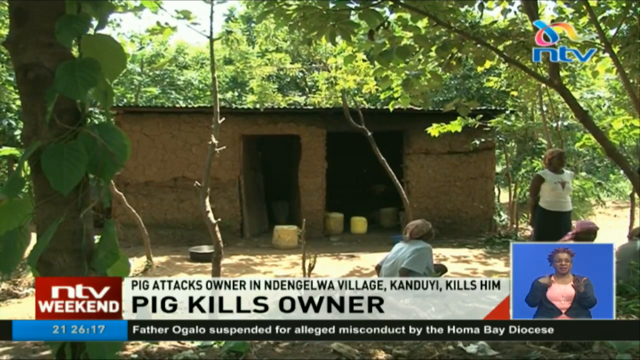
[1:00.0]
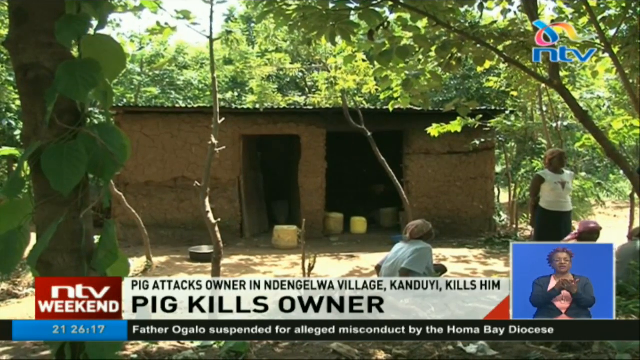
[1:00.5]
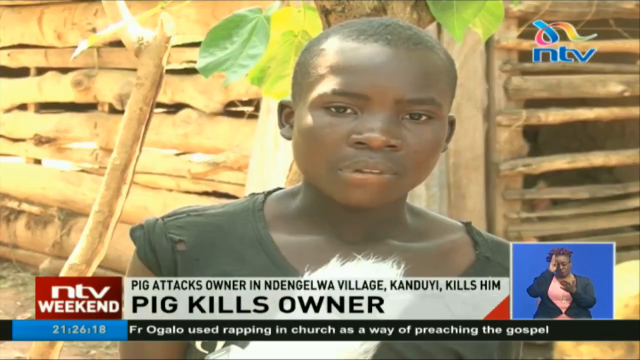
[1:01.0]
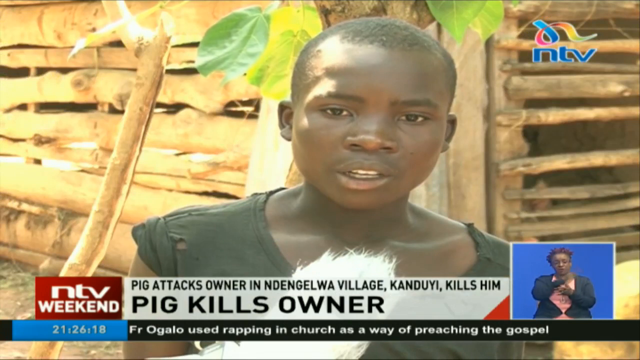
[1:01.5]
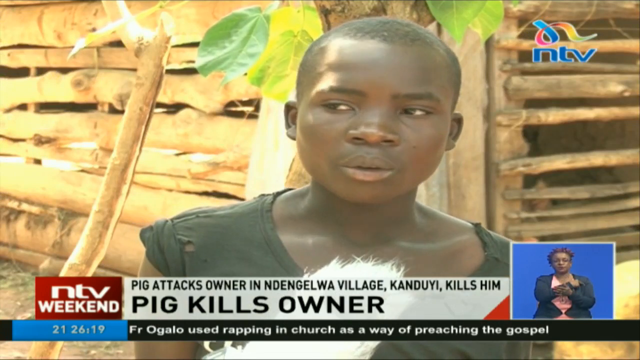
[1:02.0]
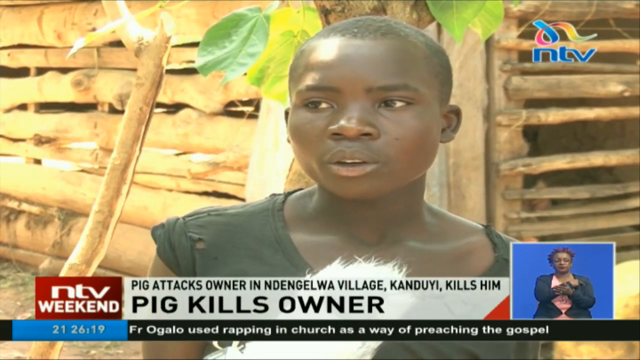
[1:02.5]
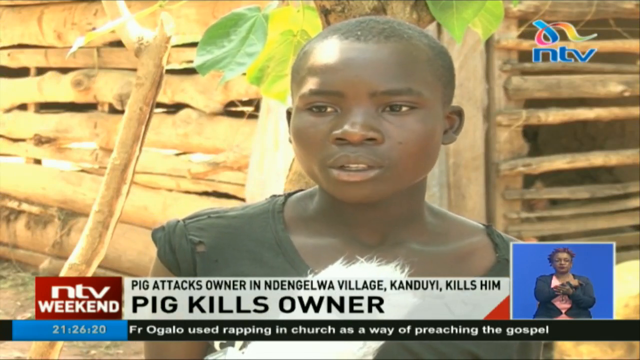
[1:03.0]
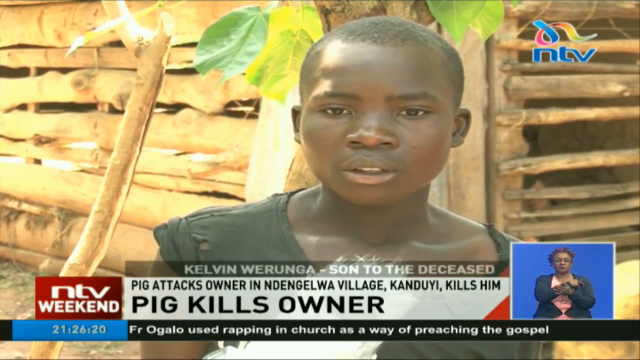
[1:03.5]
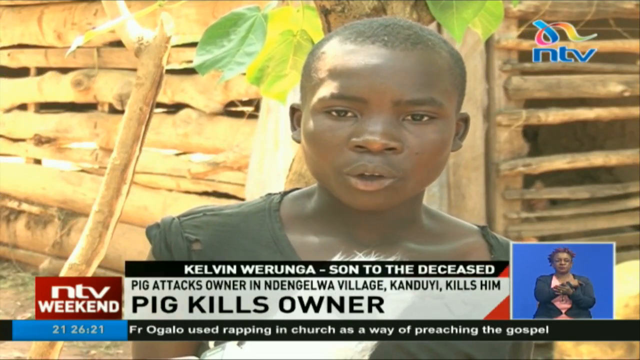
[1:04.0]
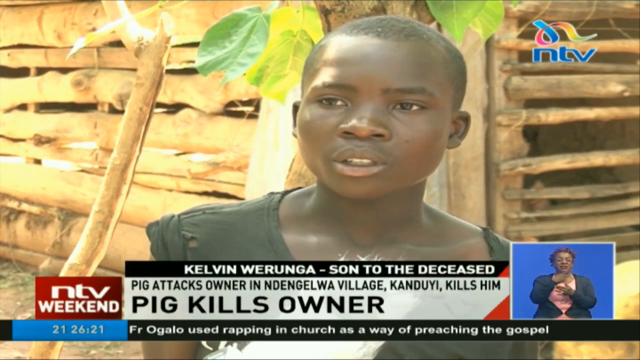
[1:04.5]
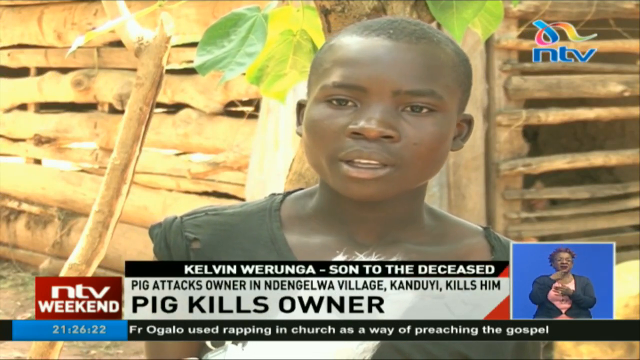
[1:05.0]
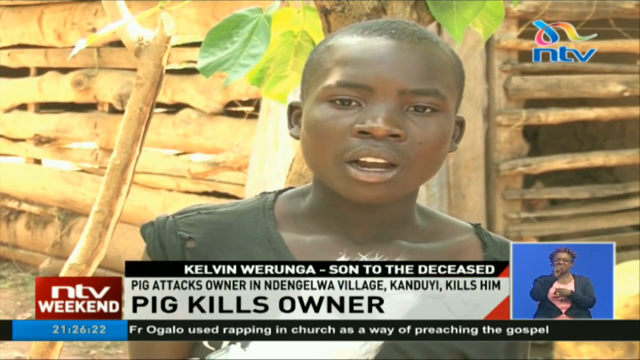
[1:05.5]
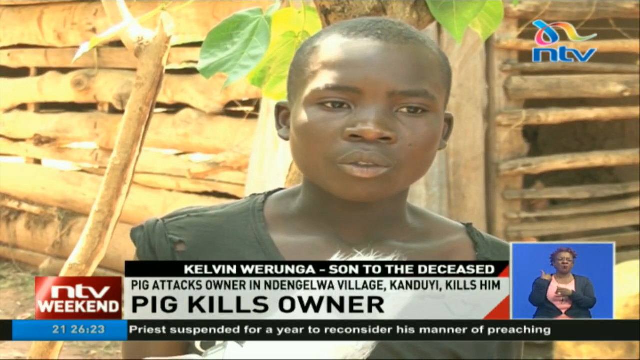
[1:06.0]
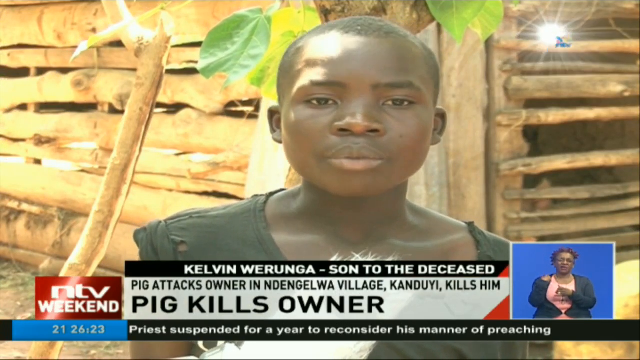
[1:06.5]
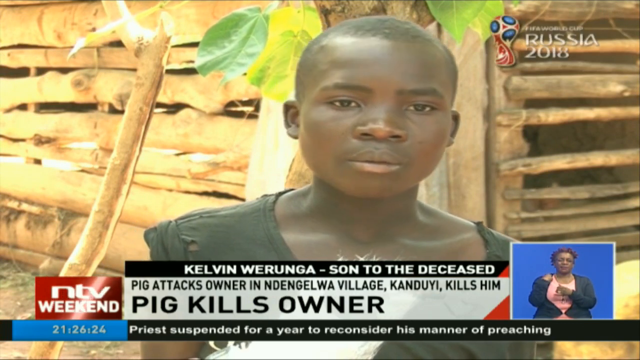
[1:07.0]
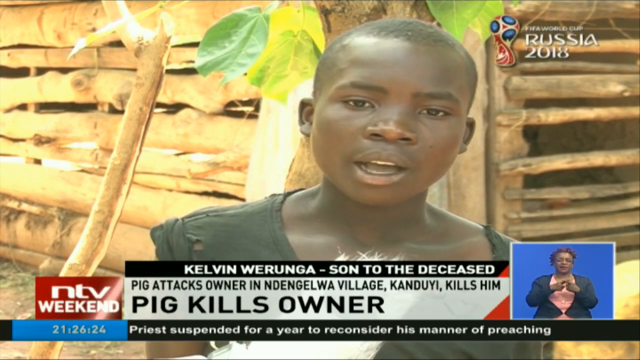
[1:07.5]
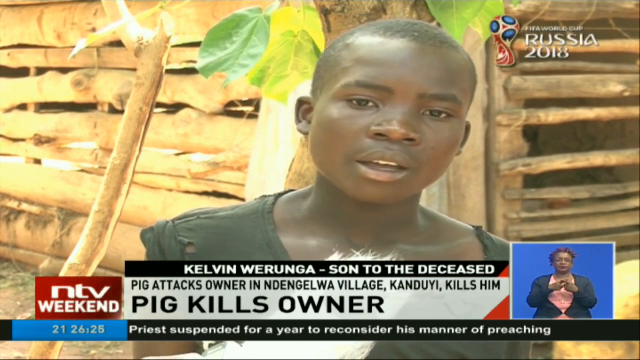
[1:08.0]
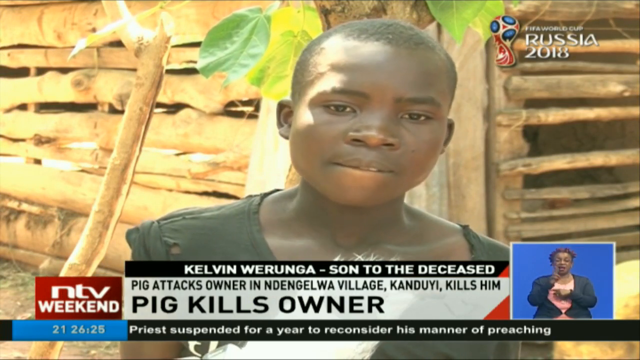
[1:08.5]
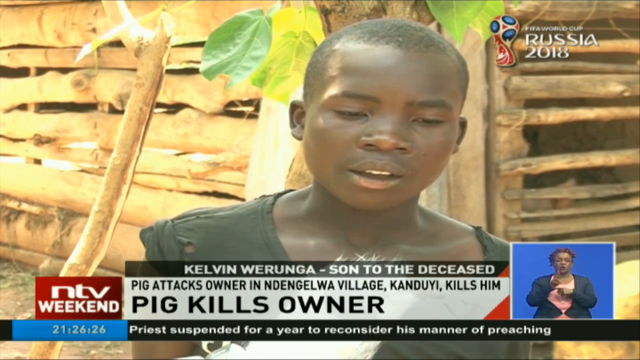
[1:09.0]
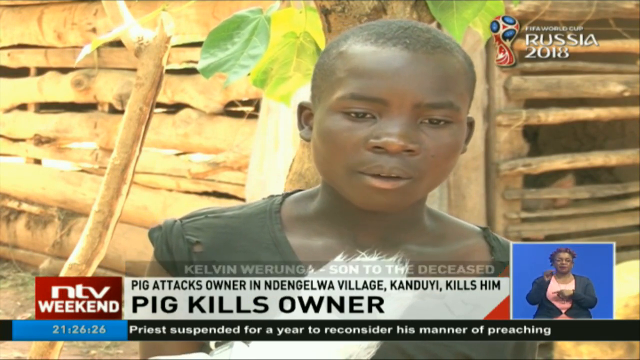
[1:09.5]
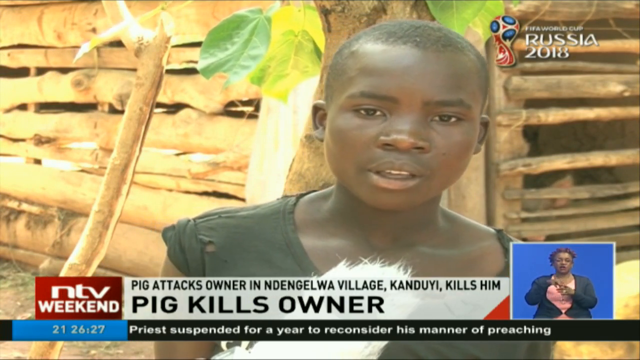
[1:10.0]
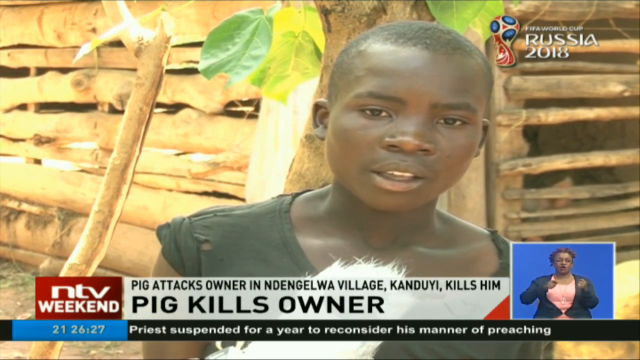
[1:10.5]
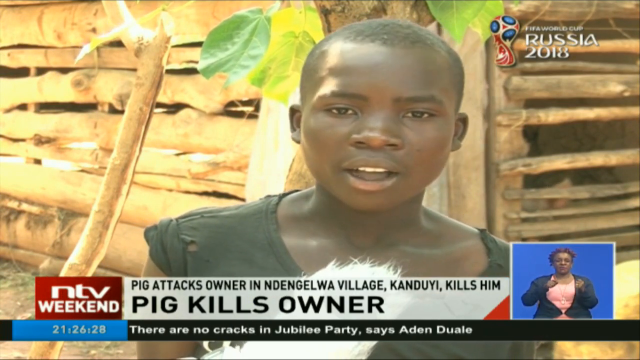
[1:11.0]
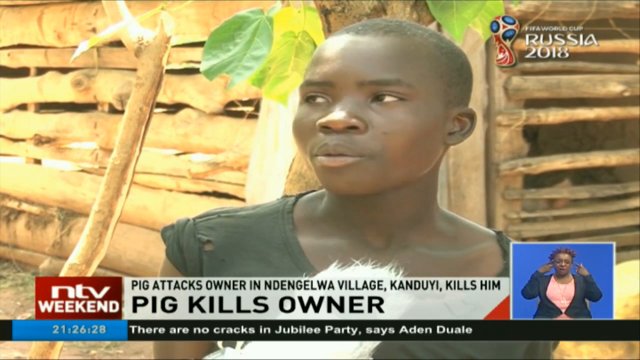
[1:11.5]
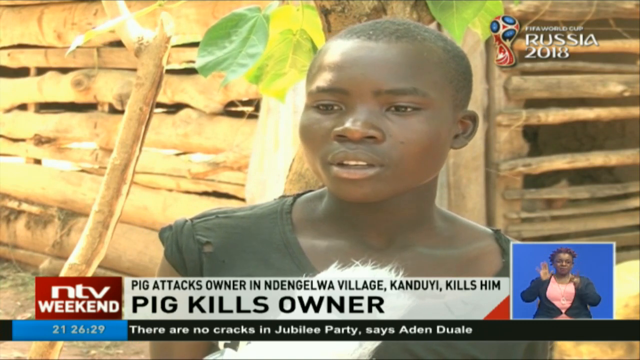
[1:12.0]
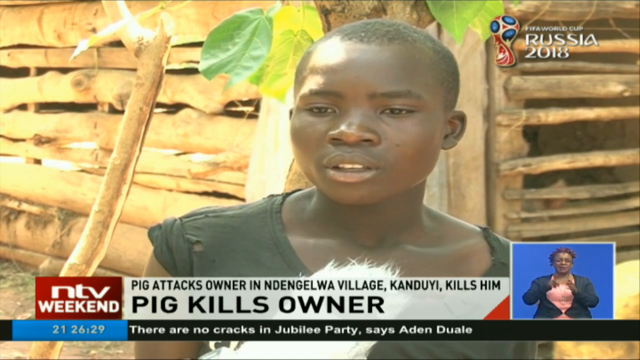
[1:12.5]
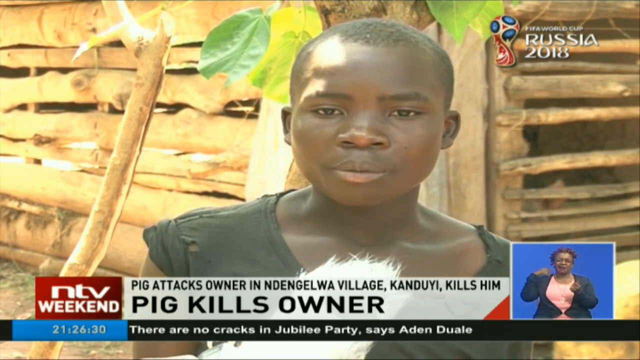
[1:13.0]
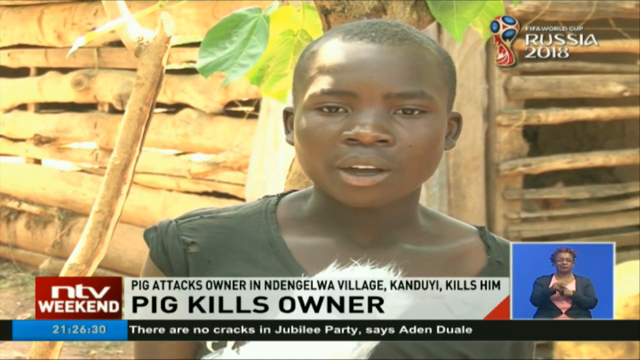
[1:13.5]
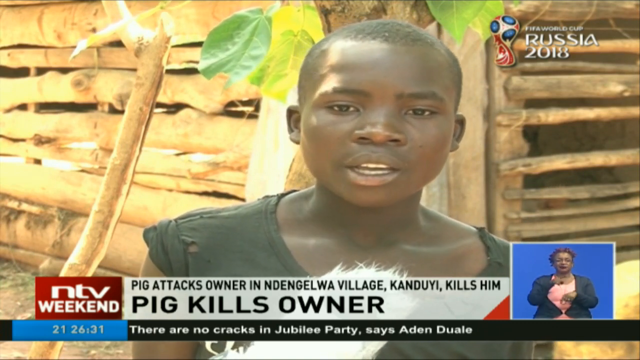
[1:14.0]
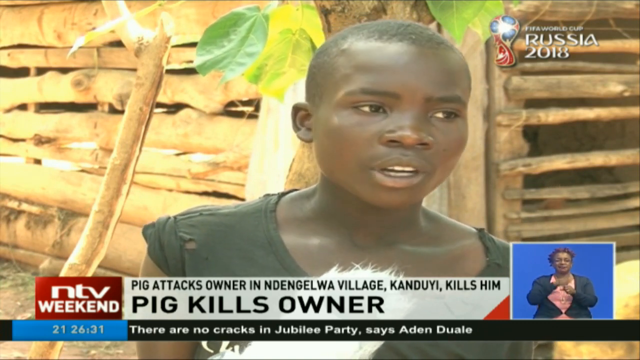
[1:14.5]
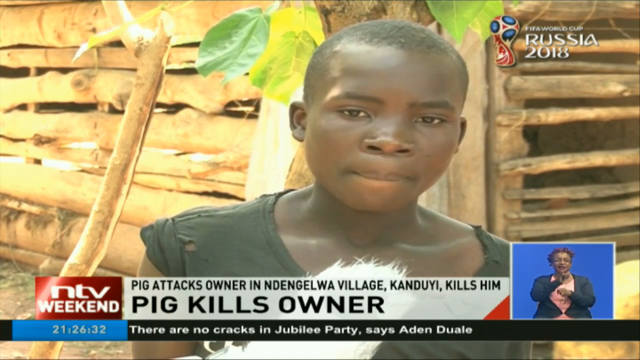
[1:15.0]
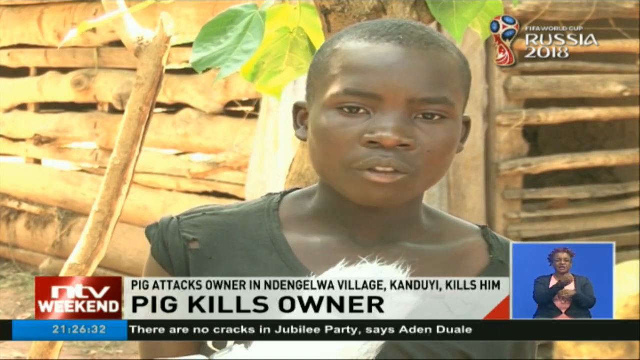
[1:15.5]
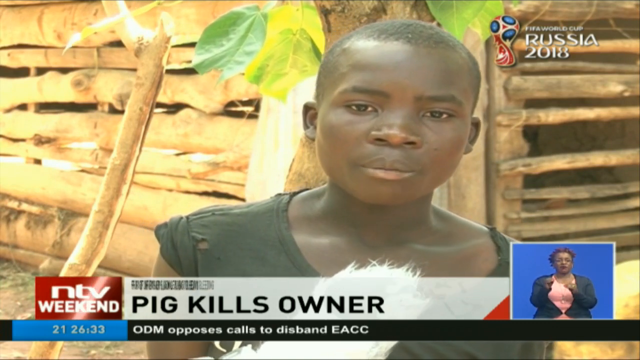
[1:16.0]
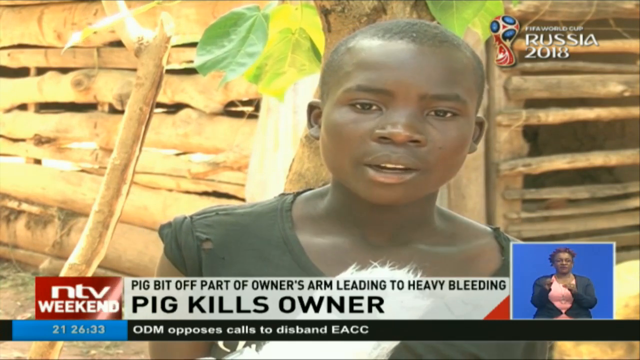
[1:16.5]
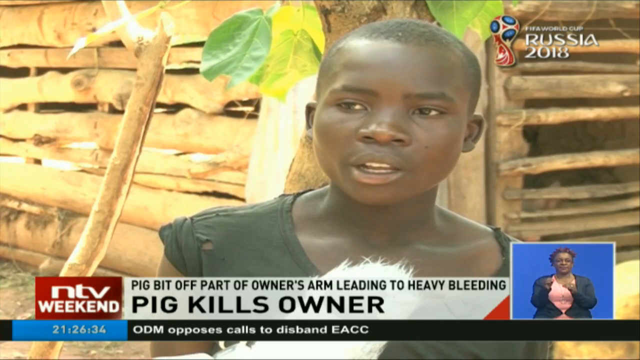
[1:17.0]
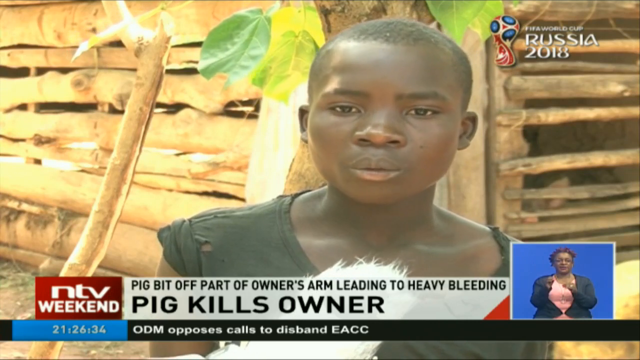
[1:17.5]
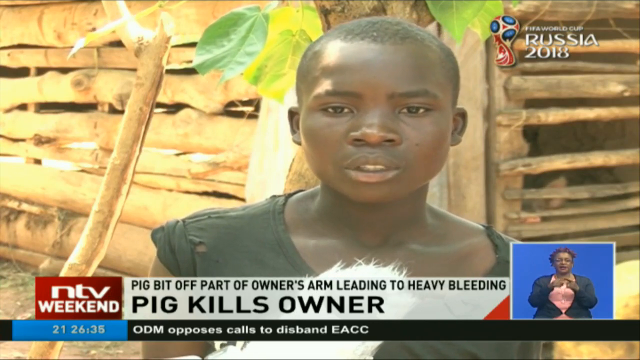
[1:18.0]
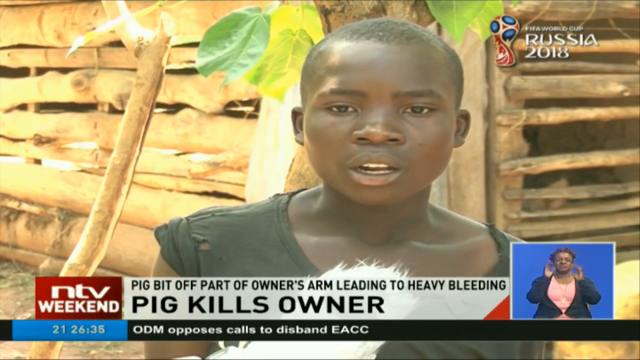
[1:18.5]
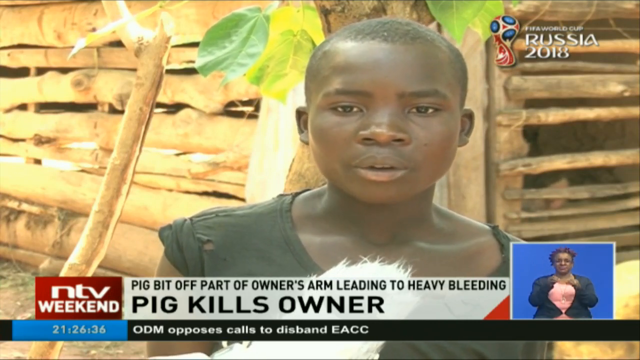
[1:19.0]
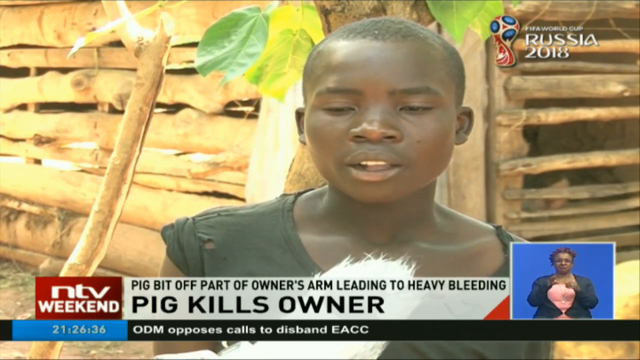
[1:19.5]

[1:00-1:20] A young, handsome boy wearing a black t-shirt is interviewed. He is Kelvin Werunga, who seems to be the son of the deceased, Mr. Werunga. Kelvin appears sad during the interview and seems to be talking to the journalist, with sadness visible on his face.